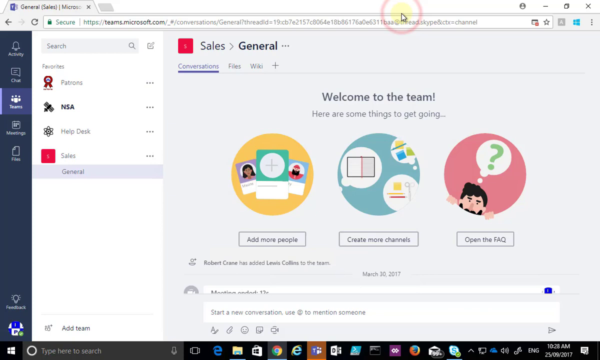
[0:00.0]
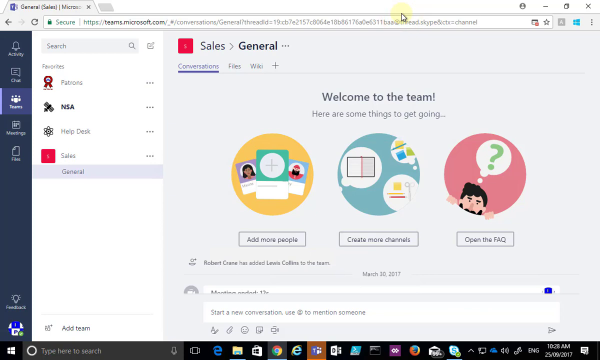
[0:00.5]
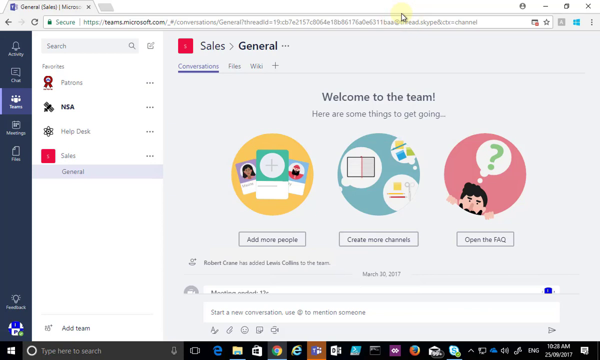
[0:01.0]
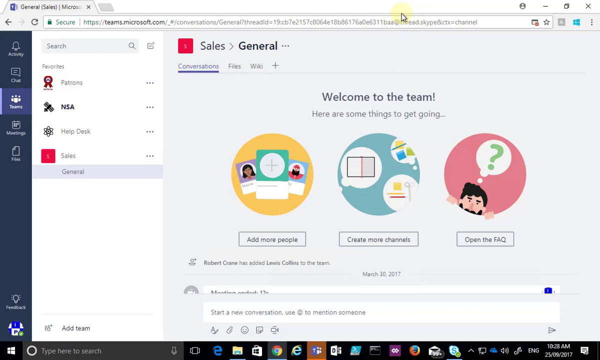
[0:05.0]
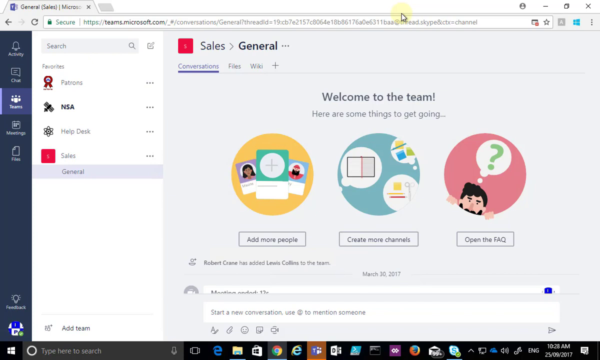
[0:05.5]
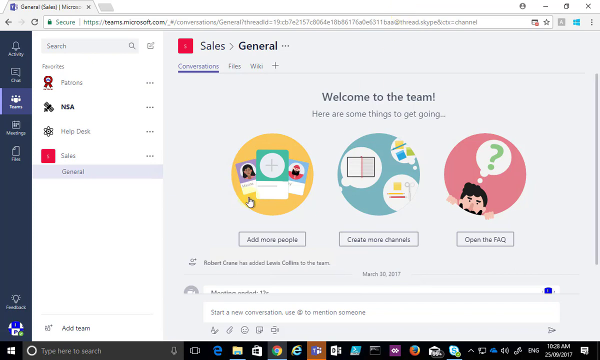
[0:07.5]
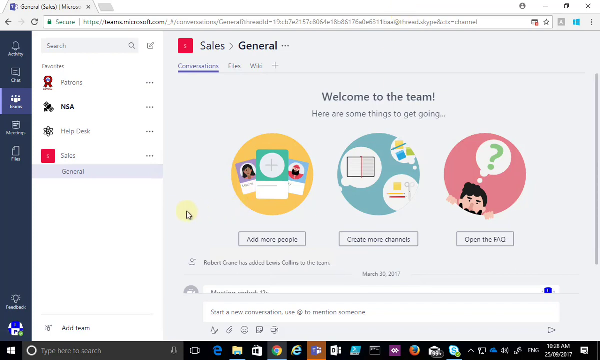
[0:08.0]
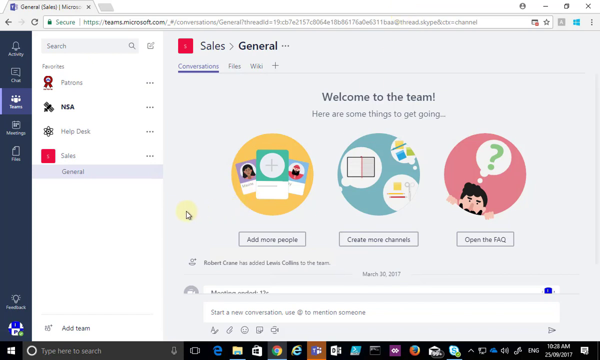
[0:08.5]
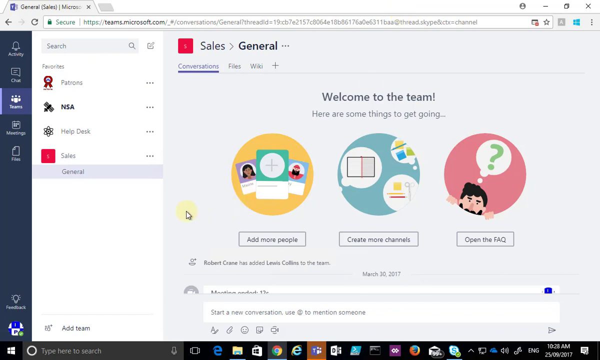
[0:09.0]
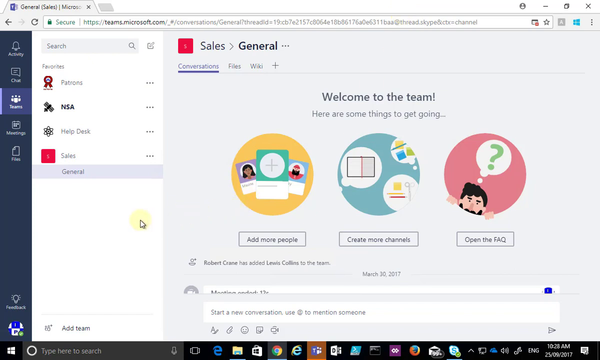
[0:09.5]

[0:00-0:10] The video opens on a desktop computer screen with a tab open labeled "General Sales, Microsoft." Down the left side of the screen are "Activity," "Chat," "Teams," "Meetings," "Files" and "Feedback." Next to that left menu is a search panel listing "Patrons," "NSA," "Help Desk," "Sales" and "General." The main part of the screen shows "Sales, General," with "Conversations," "Files" and "Wiki" and a plus sign below it. A "Welcome to the team" message follows, reading "Here are some things to get going." Beneath it are three icons. The first has cards on it and says "Add more people." The middle one has different bubbles, such as a medical bubble and a book bubble, and says "Create more channels." The third shows a person sort of peeking up from the bottom of the icon's bubble, hands on the sides as though pulling themselves up, with a text bubble containing a question mark coming from their head; below it the text says "Open the FAQ." There is more information at the bottom of the screen.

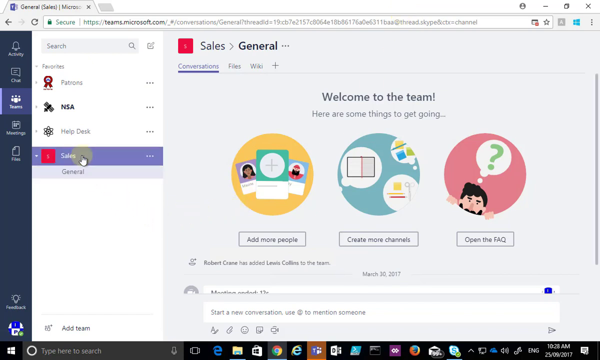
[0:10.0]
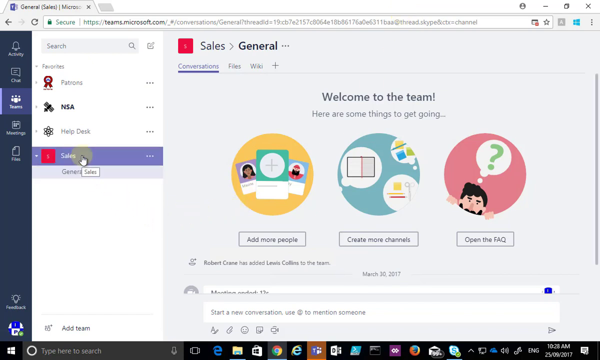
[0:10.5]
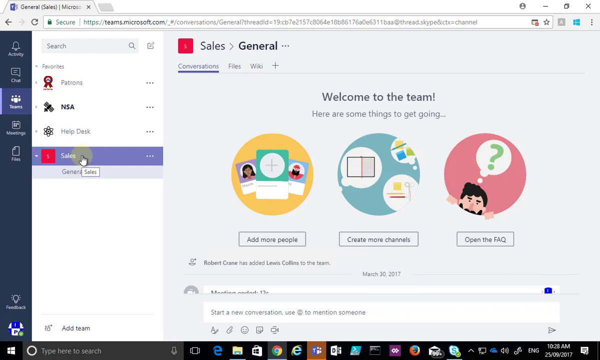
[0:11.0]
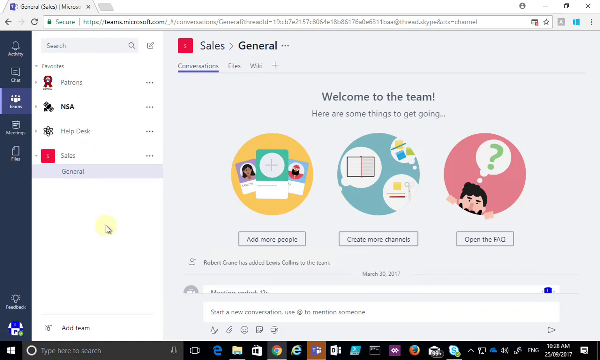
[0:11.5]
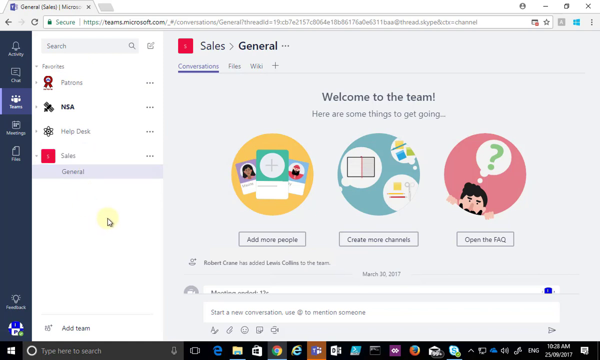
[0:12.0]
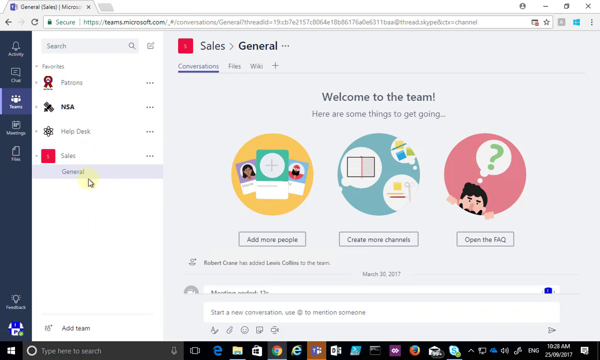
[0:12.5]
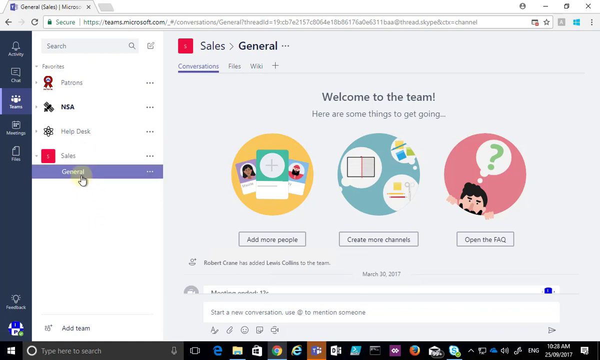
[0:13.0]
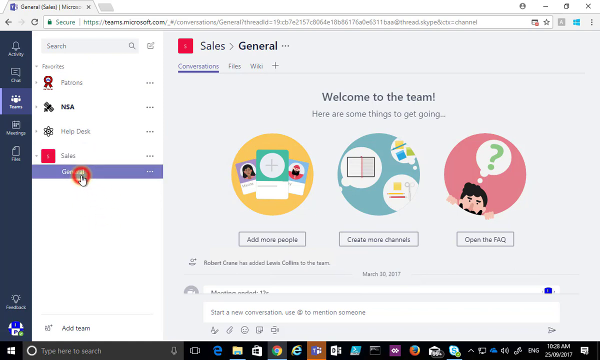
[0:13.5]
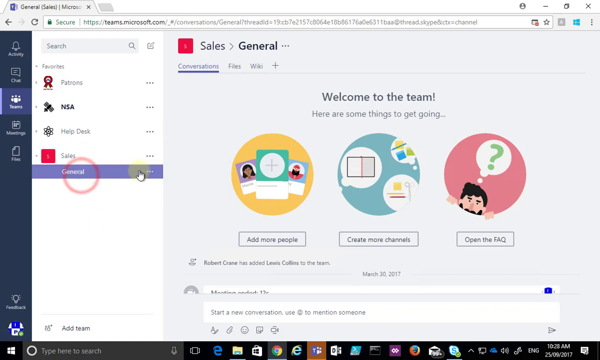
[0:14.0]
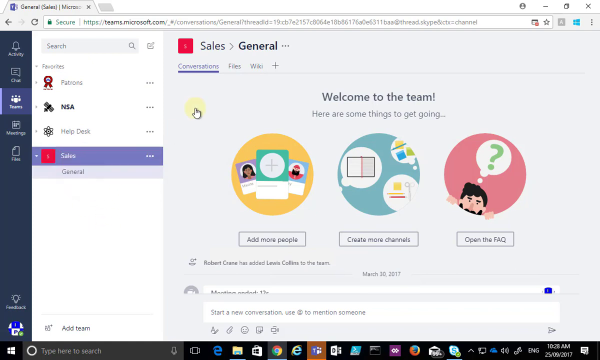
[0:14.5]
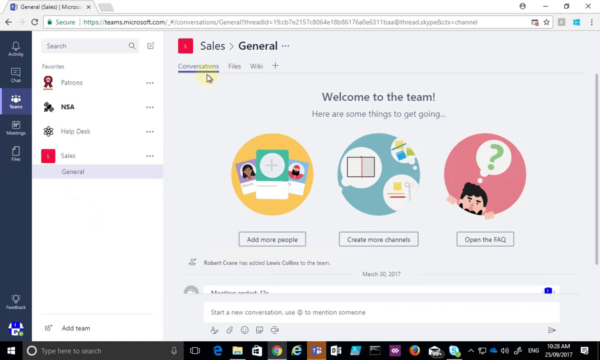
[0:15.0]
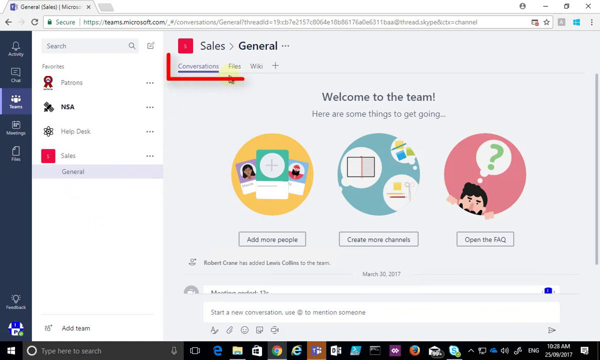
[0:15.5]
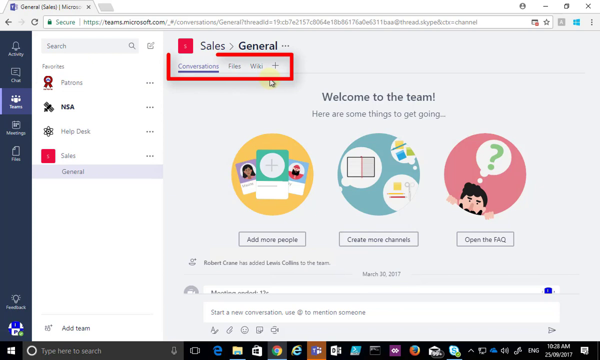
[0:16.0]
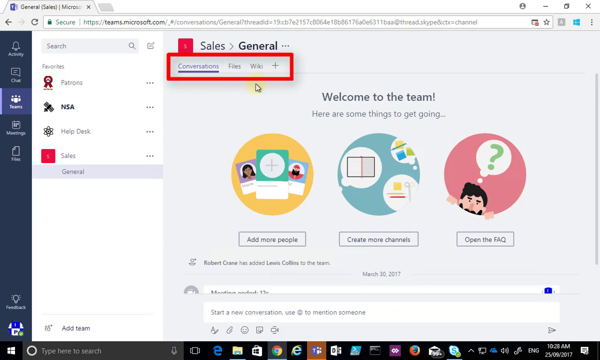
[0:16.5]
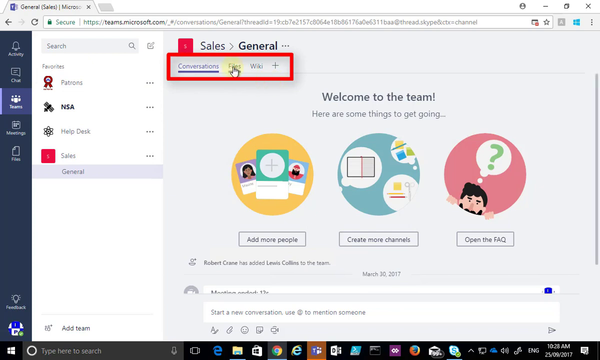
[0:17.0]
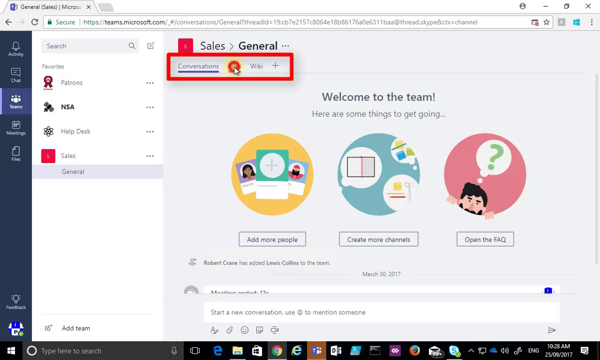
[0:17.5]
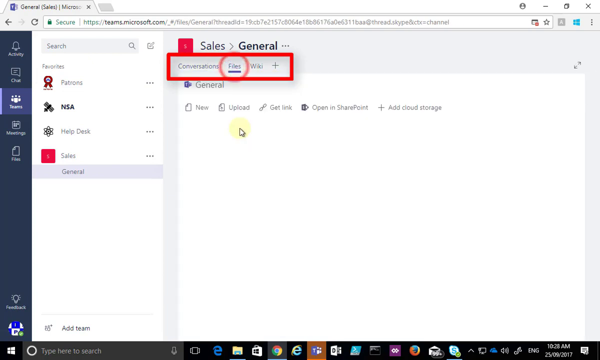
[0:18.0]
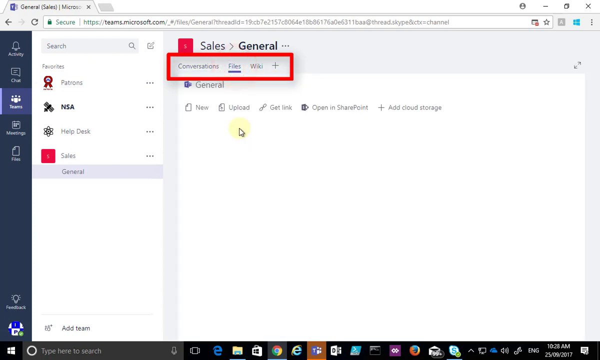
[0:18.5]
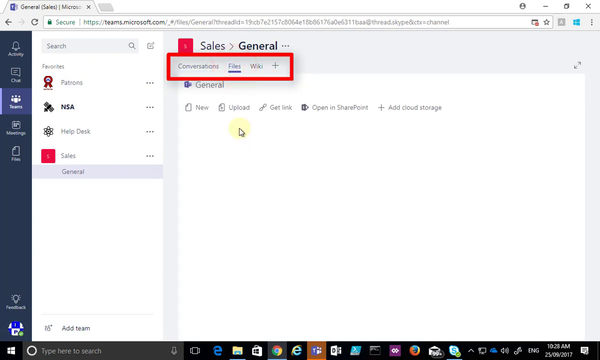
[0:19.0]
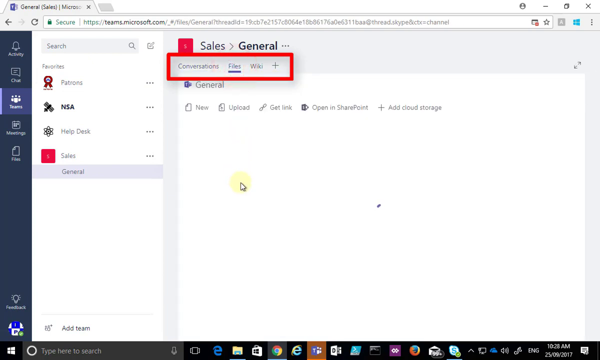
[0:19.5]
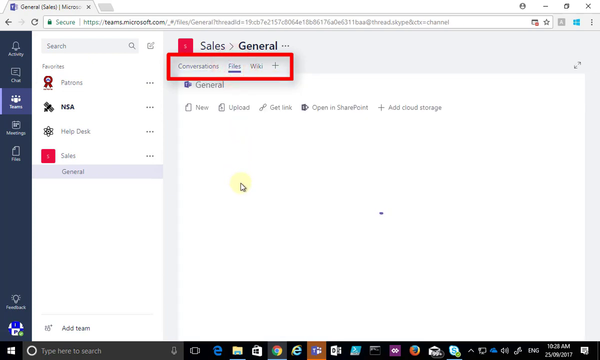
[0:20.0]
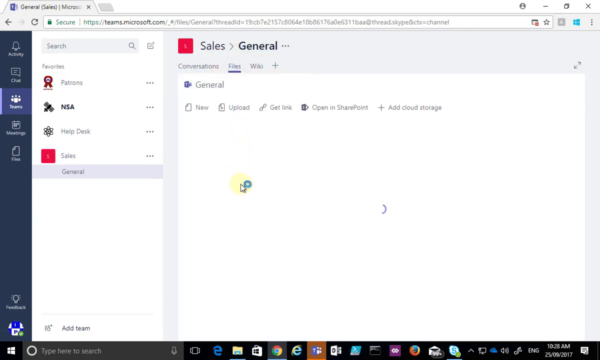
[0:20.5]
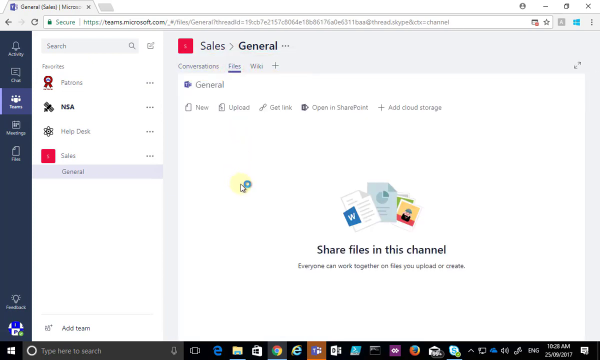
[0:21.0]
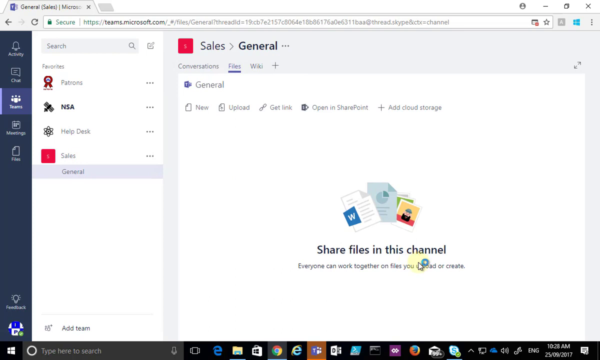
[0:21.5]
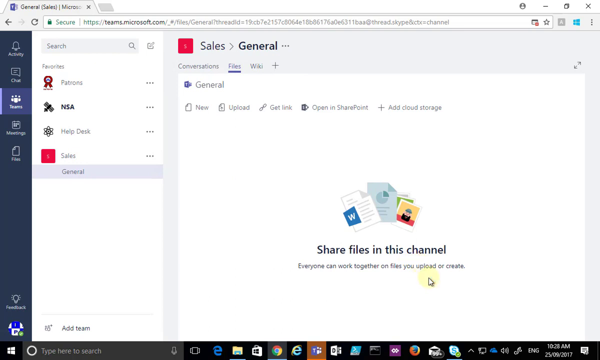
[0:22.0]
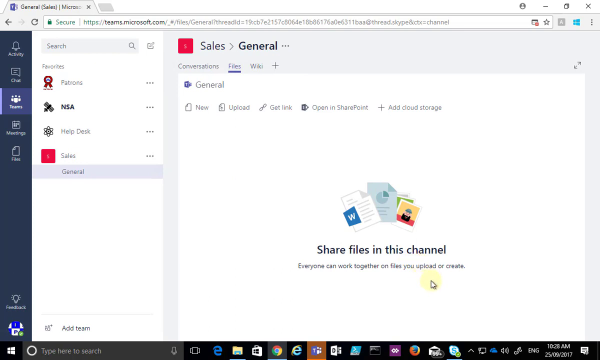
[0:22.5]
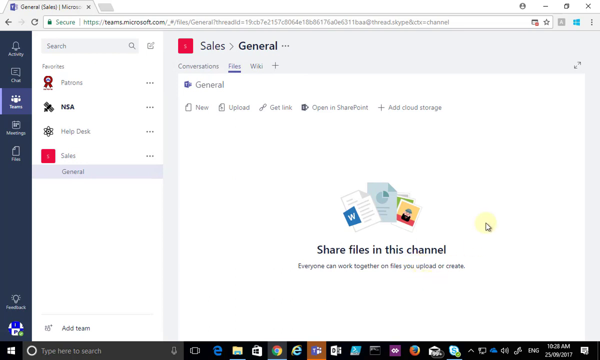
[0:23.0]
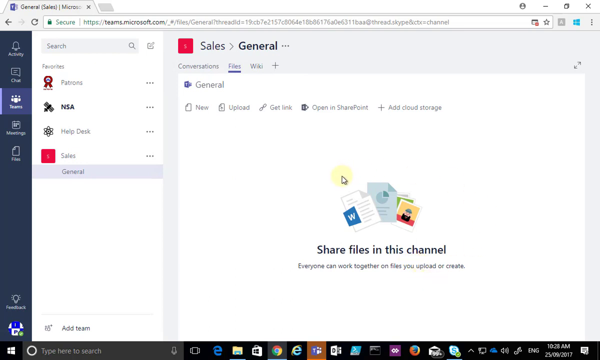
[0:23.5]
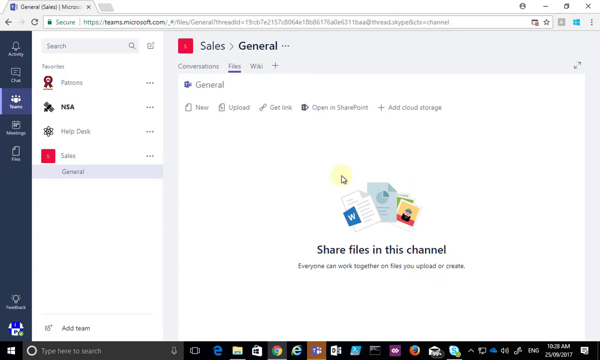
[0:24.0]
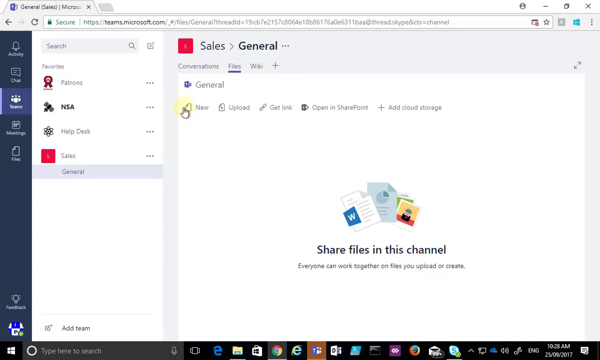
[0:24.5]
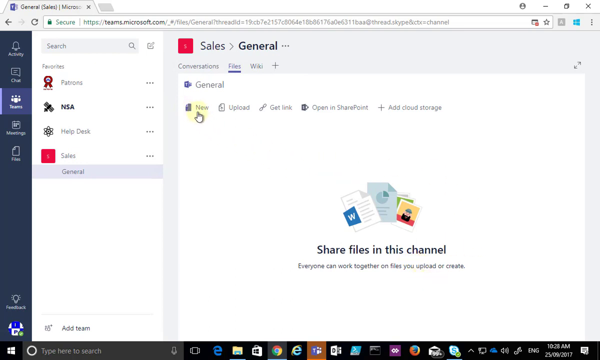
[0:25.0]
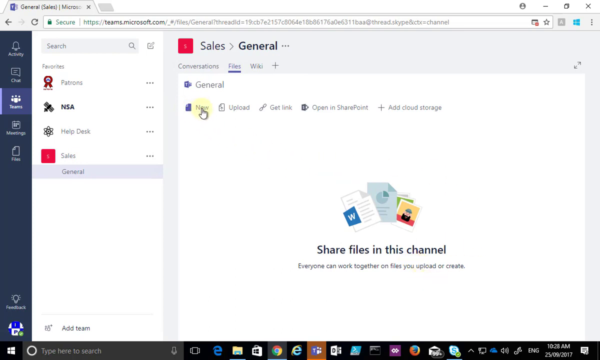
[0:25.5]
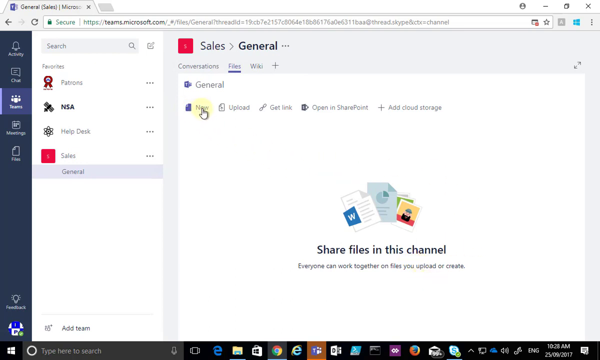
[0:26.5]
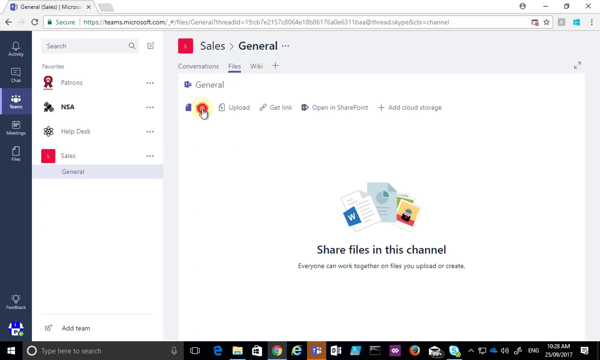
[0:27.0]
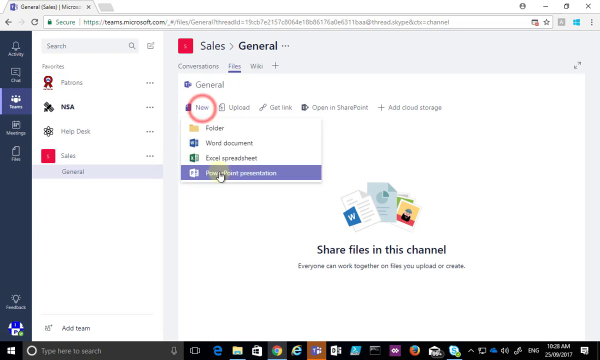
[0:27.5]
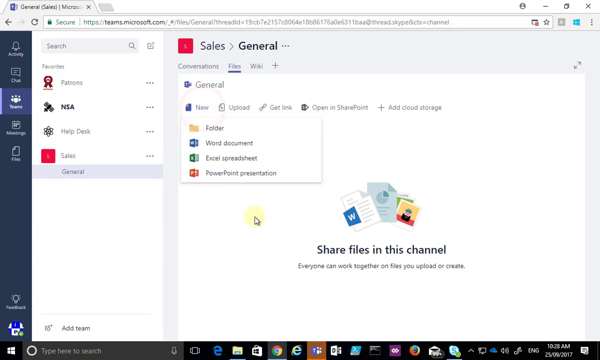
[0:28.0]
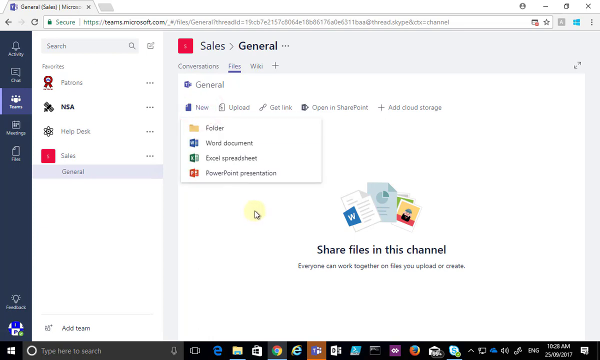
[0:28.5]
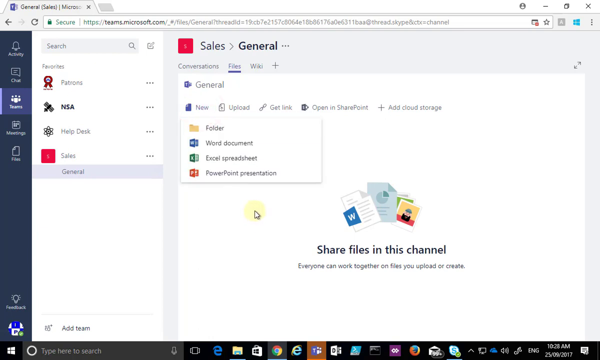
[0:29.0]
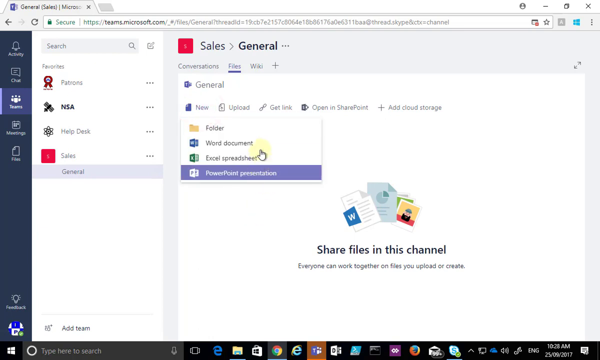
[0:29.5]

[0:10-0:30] The Sales General page shows the "Welcome to the team" message, "Here are some things to get going," with the options to add more people, create more channels and open the FAQ, plus a search on the page. The cursor moves to the General icon, then circles the Conversations, Files and Wiki areas with a big red marker and selects Files. A General tab comes up with "New," "Upload," "Get link," "Open in SharePoint" and "Add cloud storage." In the middle of the screen it says "Share files in this channel," with a number of example files such as Word documents, photos and graphs, and the text "Everyone can work together on files you upload or create." New is selected, opening a drop-down menu with "Folder," "Word document," "Excel spreadsheet" and "PowerPoint presentation," and Word document is chosen.